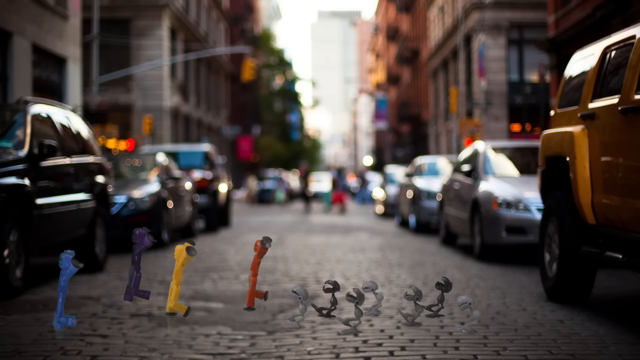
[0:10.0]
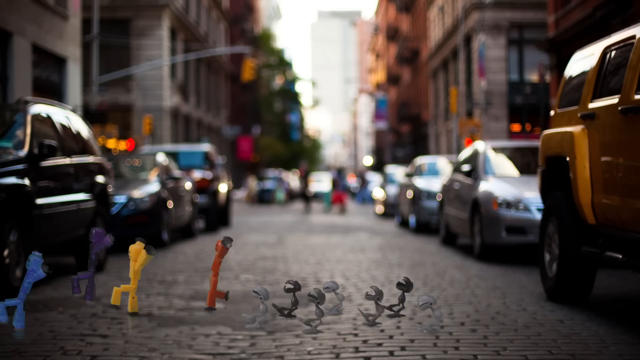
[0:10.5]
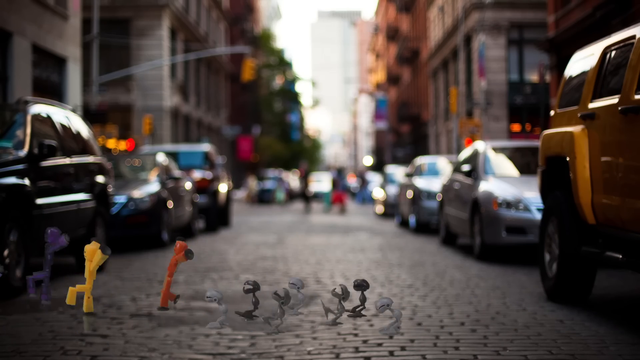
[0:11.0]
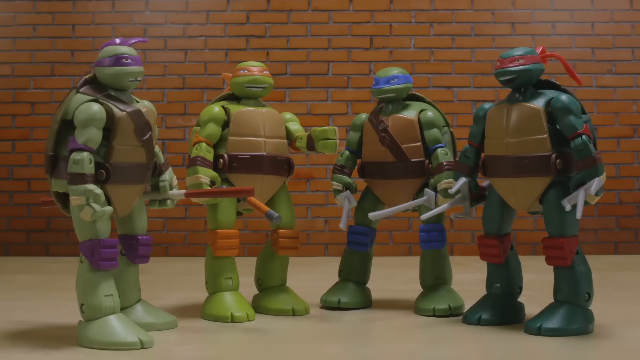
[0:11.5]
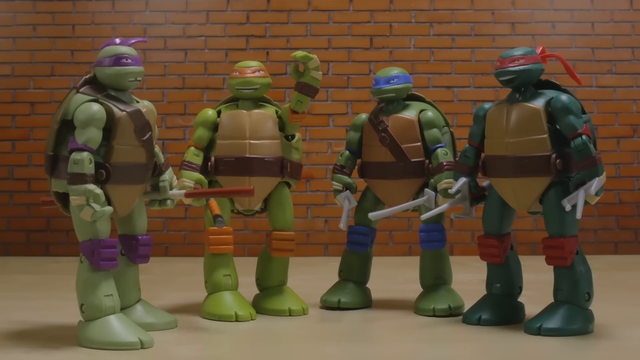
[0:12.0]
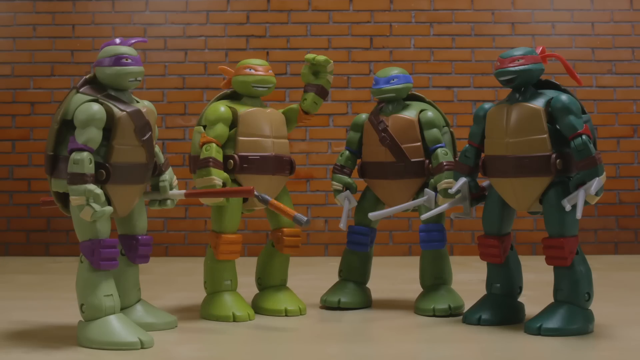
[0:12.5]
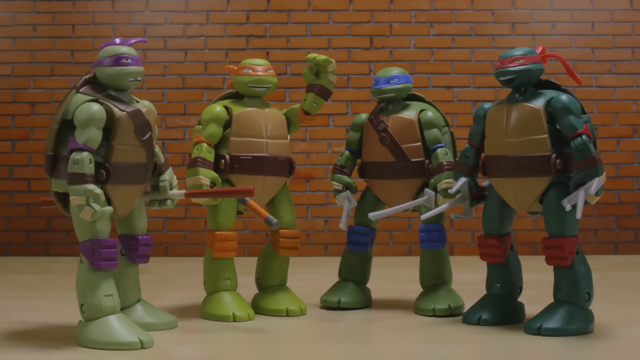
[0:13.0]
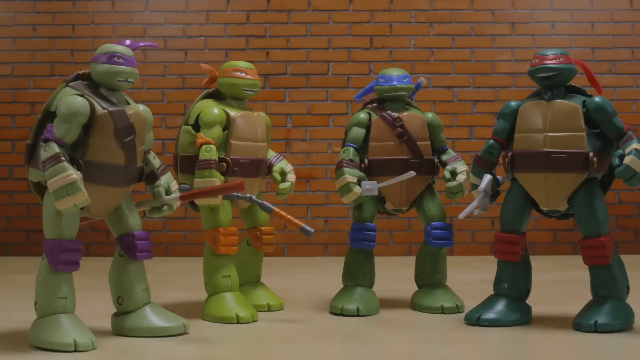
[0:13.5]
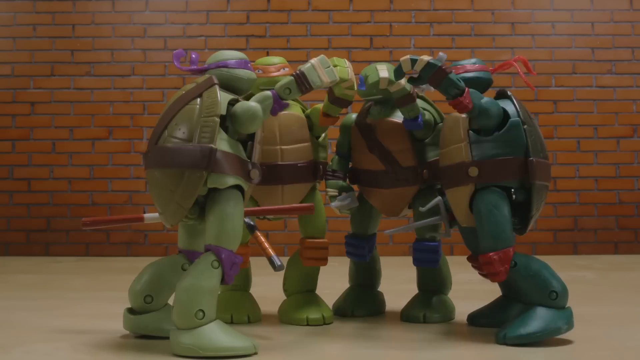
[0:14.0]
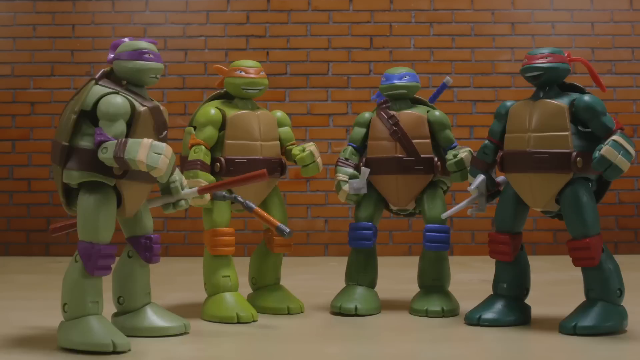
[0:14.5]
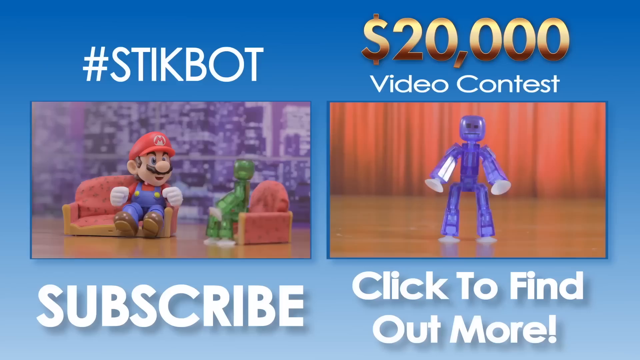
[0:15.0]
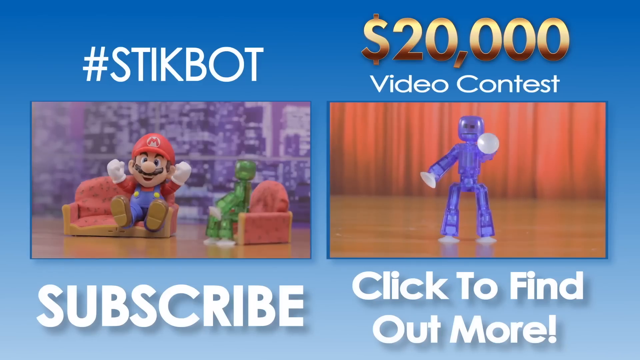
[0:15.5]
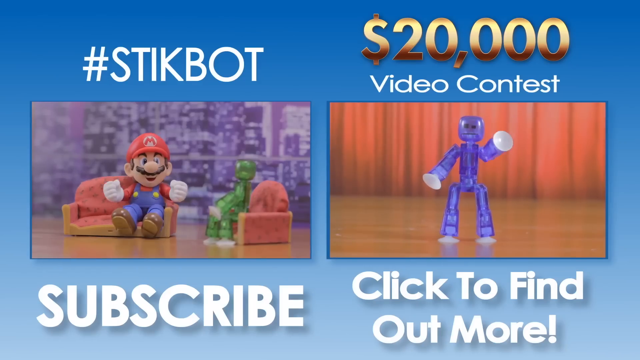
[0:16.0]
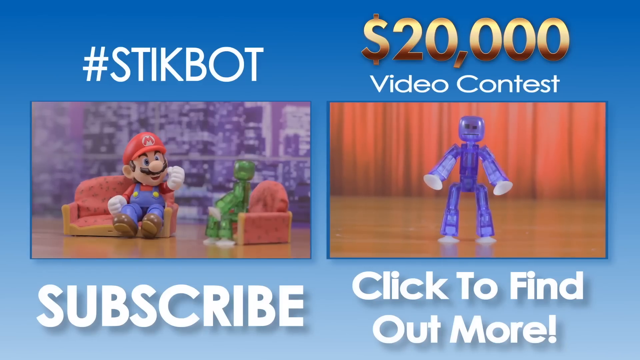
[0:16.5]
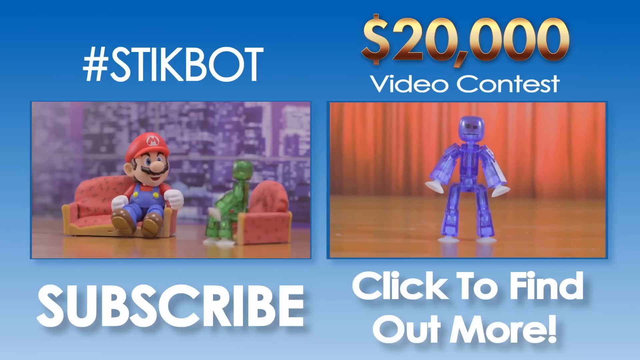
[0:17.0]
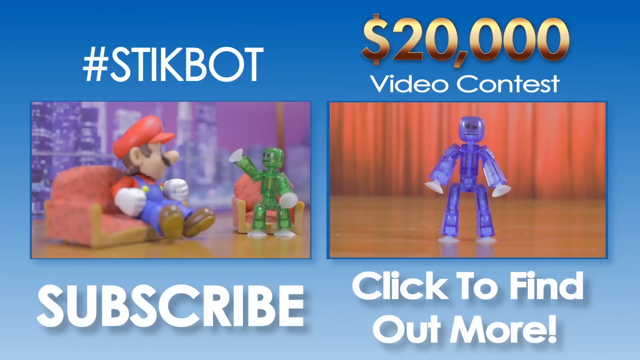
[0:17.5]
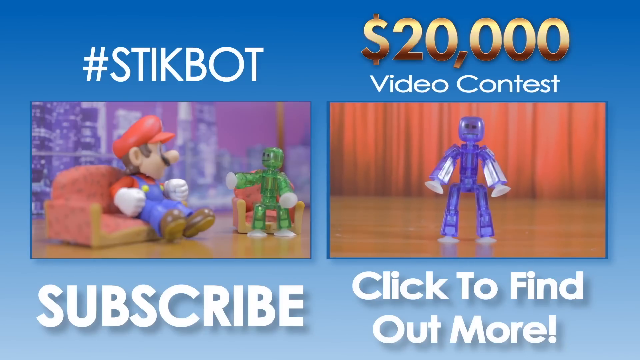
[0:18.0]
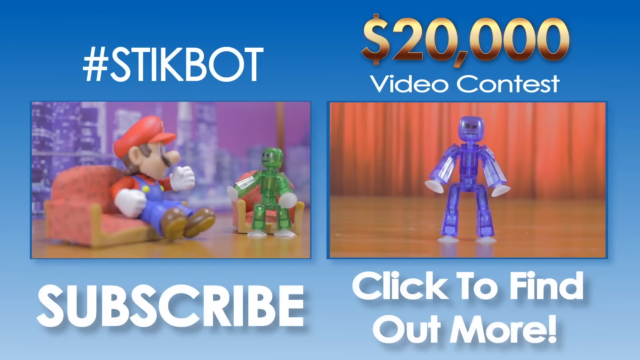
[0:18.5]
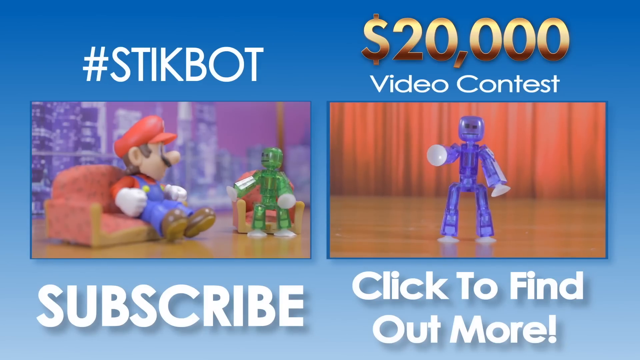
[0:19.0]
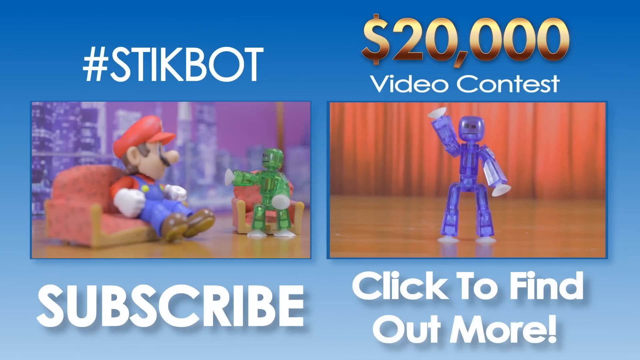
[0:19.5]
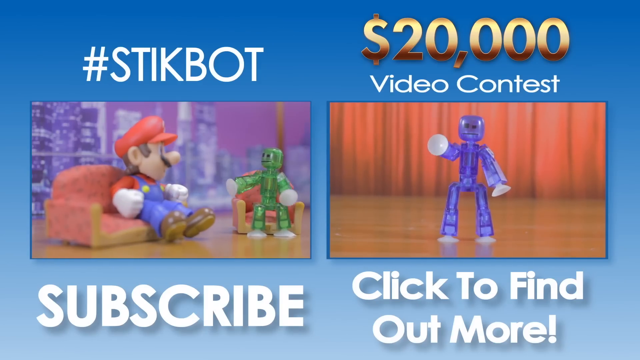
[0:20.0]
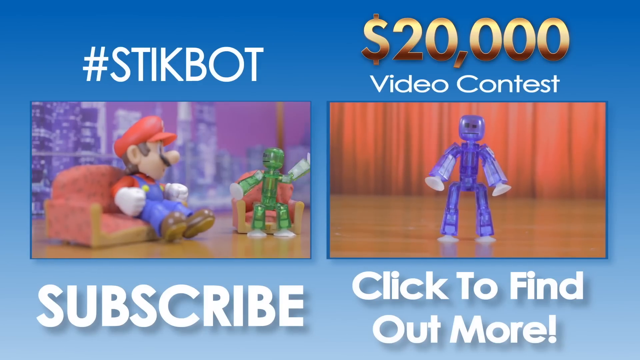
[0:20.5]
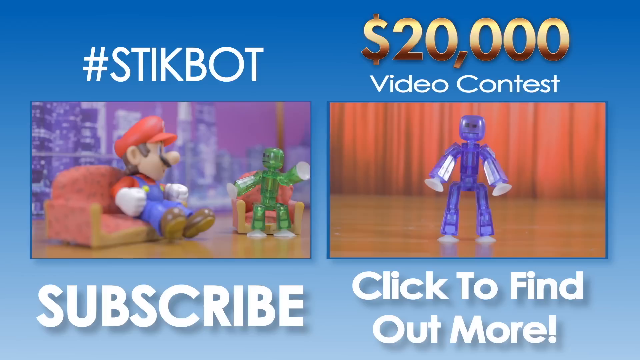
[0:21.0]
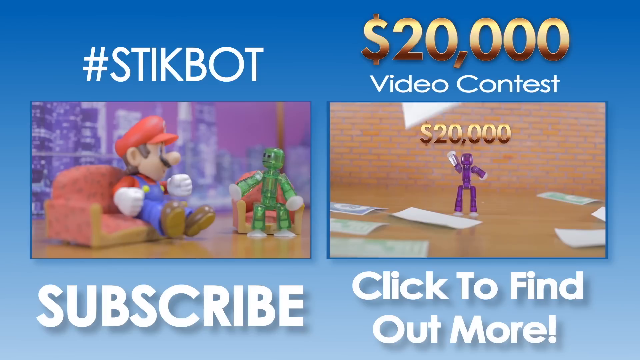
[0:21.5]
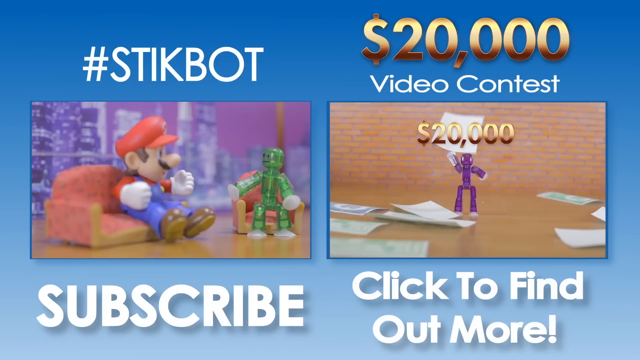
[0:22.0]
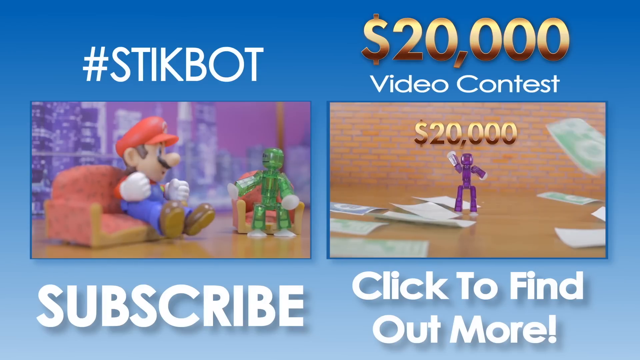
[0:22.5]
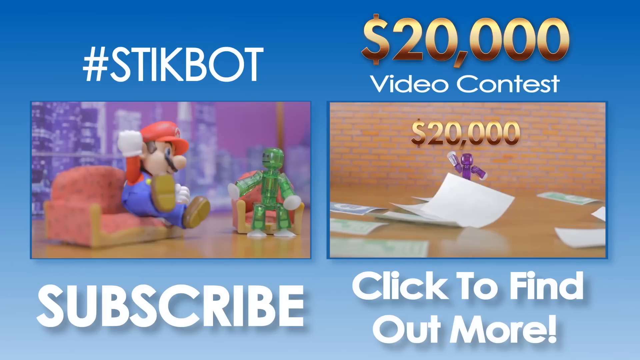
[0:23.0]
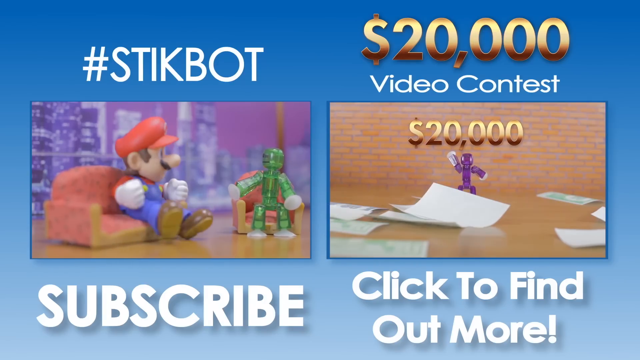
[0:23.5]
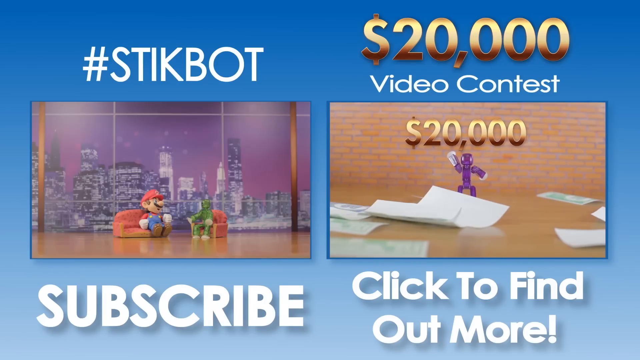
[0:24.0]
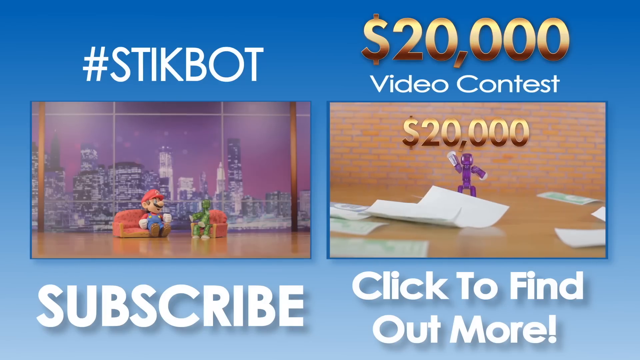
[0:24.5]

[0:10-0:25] At street level, a one-way street has cars lined down the sides, blurred out, with blurred buildings behind. Across the bottom runs a little blue creature, almost Gumby blue, followed left to right by a purple, a yellow and a red one, all running to the left. Five small robot creatures with skinny bodies and big heads chase them from behind, chomping at them. The video cuts to the turtles: Donatello on the left, then Michelangelo, then Leonardo, and Raphael on the right. Michelangelo raises his hand and twists back and forth. They all move back a little, then move together in the center, raise their hands and touch them together, then go back to standing still. Next comes an all-blue background with a video of Mario on the left and a video of a purple robot thing on the right; both look like they are on something like the Tonight Show. Above Mario the text reads "#stickbot" and below him "subscribe". On the right, above that video, it reads "20,000 video contest", and also "click to find out more". Mario, on a couch, waves his hand and talks to a green stick figure on a little chair, and a little stick figure waves his hand. Money falls down in the video on the right, and then "$20,000" pops up above it.